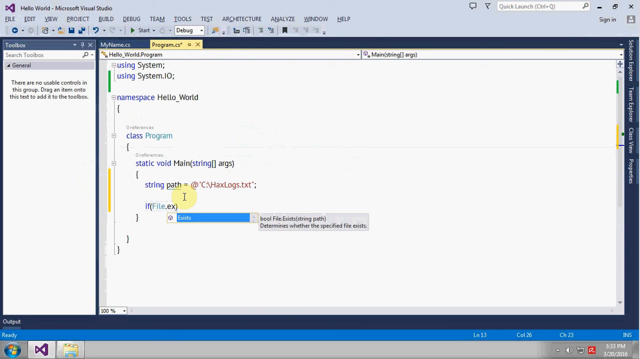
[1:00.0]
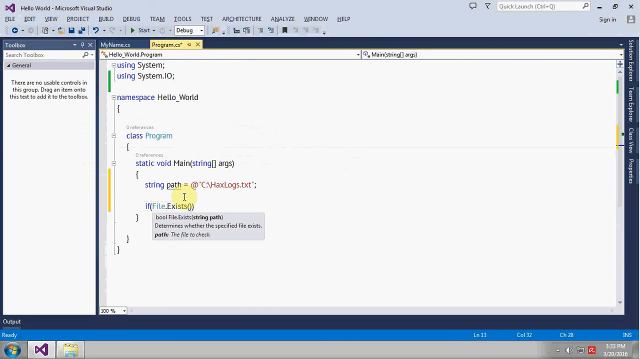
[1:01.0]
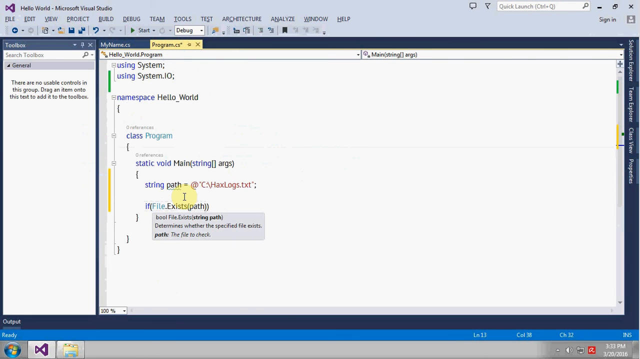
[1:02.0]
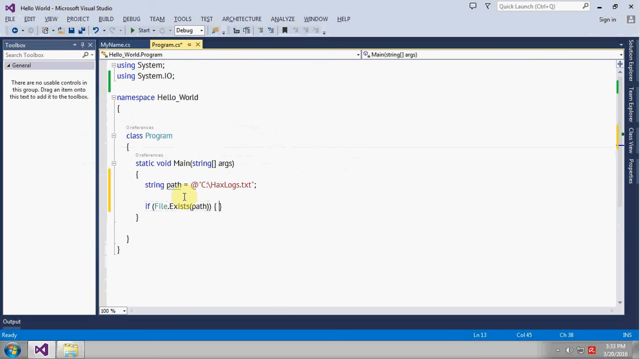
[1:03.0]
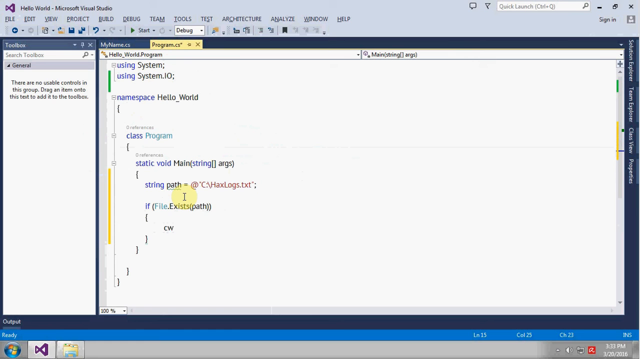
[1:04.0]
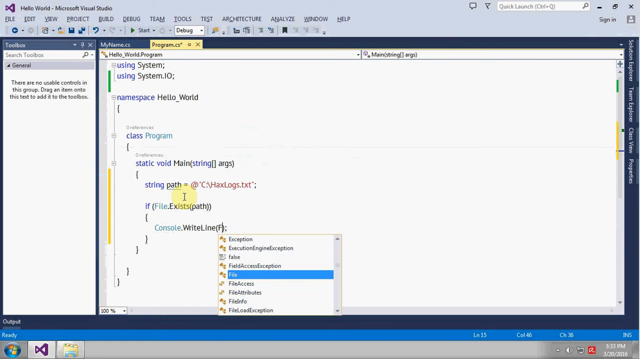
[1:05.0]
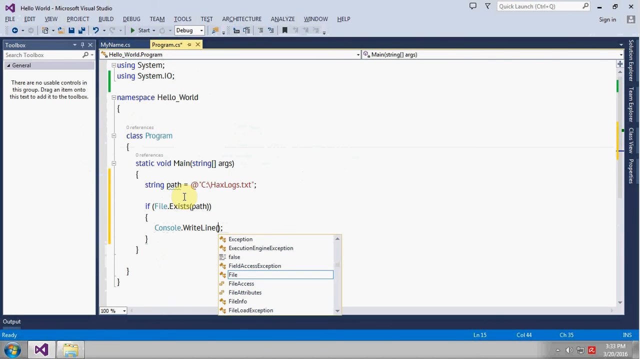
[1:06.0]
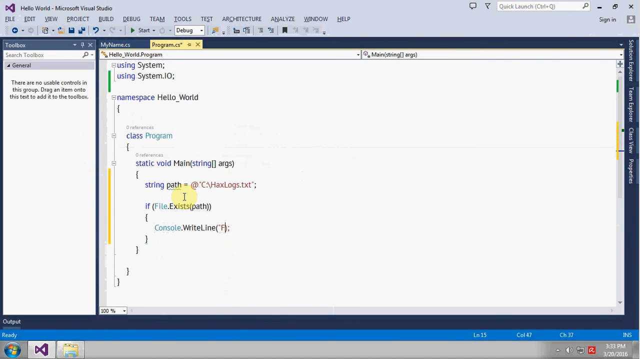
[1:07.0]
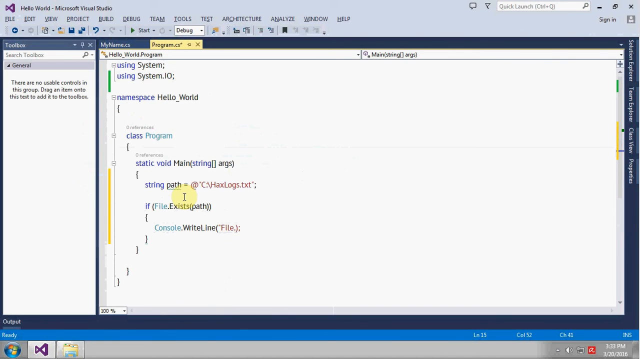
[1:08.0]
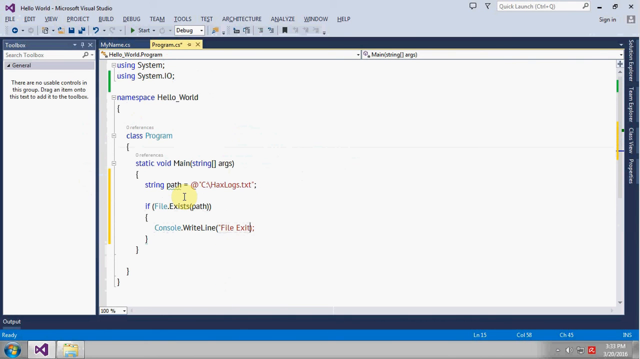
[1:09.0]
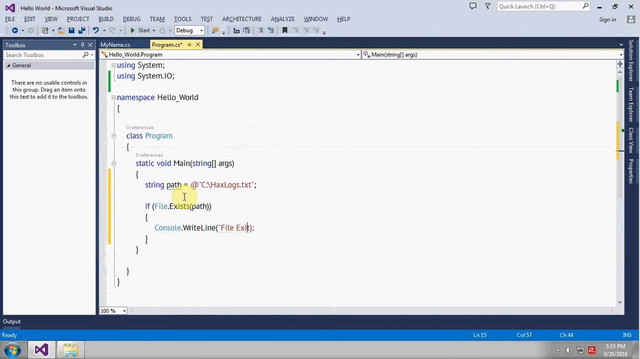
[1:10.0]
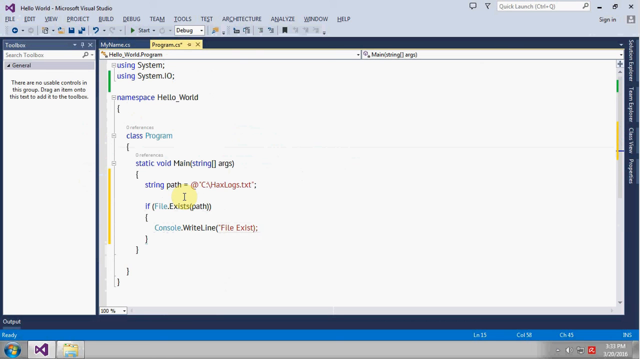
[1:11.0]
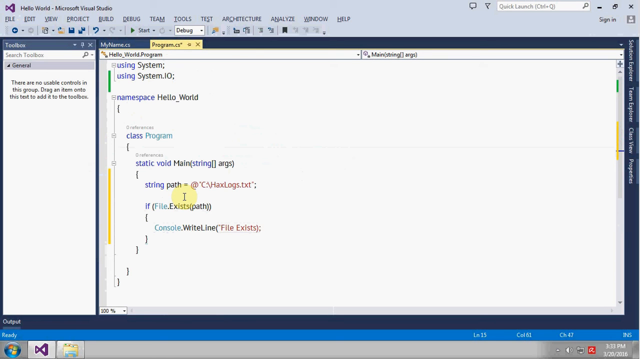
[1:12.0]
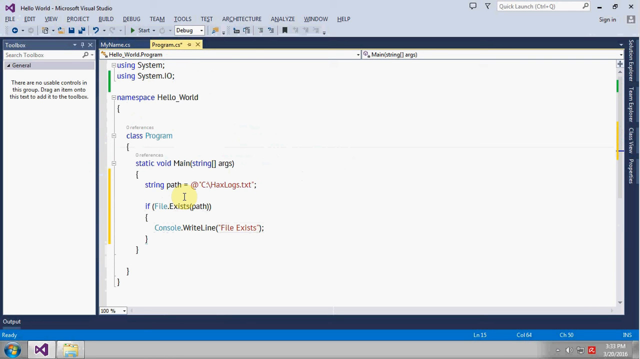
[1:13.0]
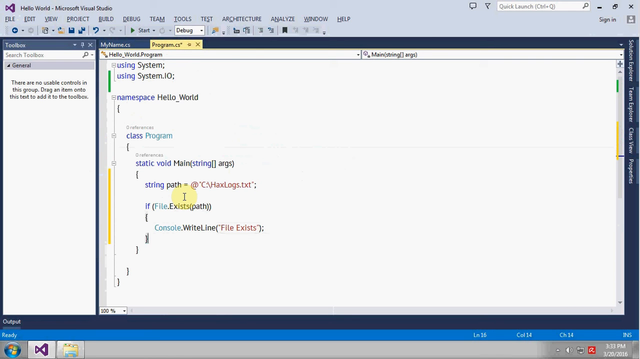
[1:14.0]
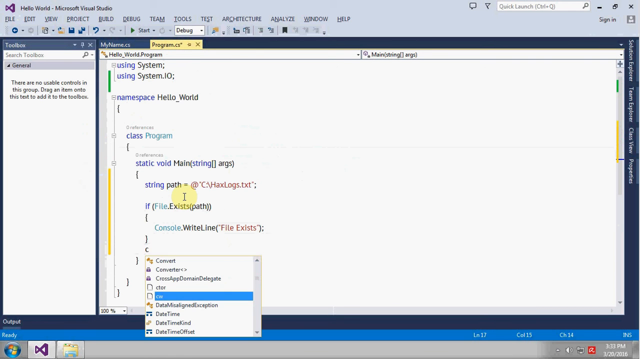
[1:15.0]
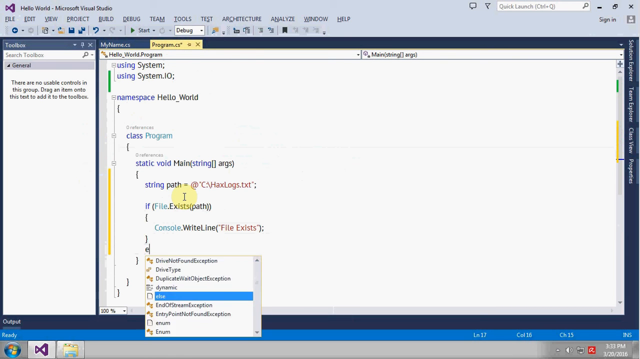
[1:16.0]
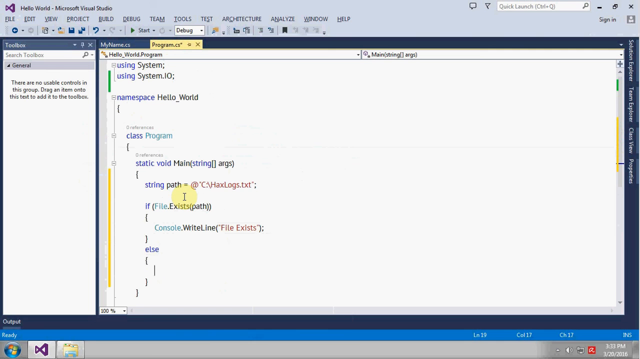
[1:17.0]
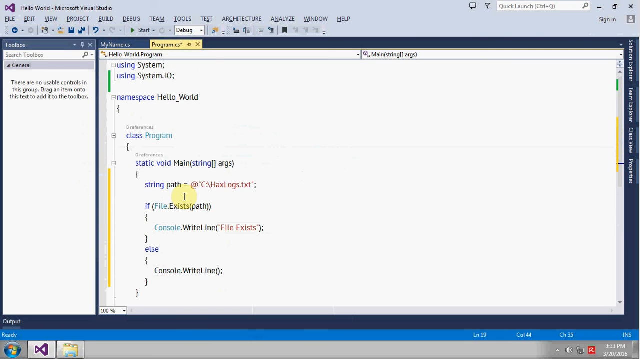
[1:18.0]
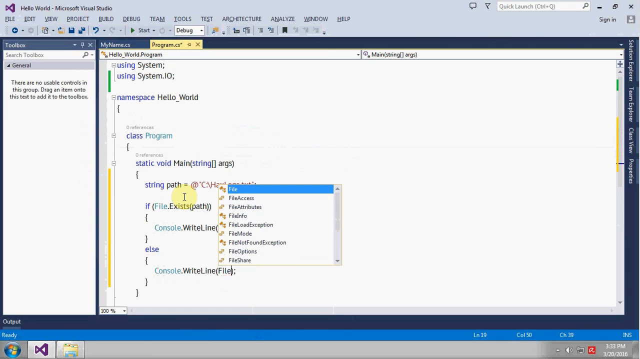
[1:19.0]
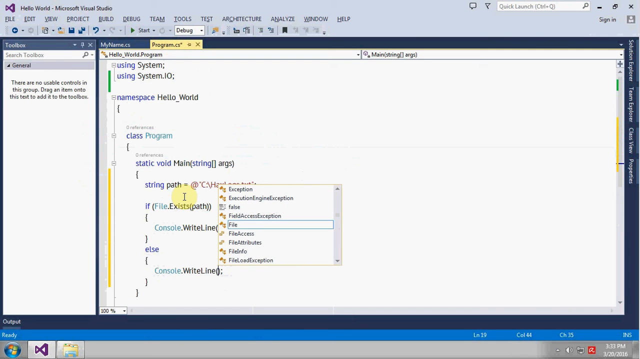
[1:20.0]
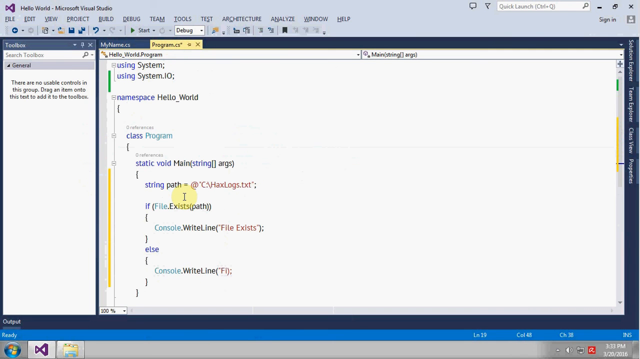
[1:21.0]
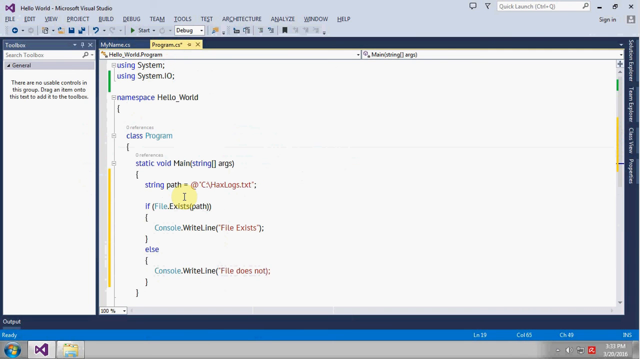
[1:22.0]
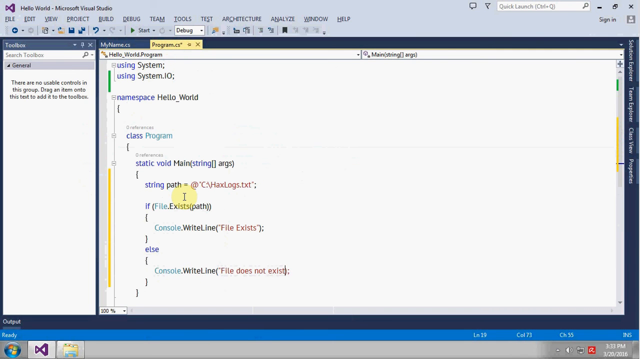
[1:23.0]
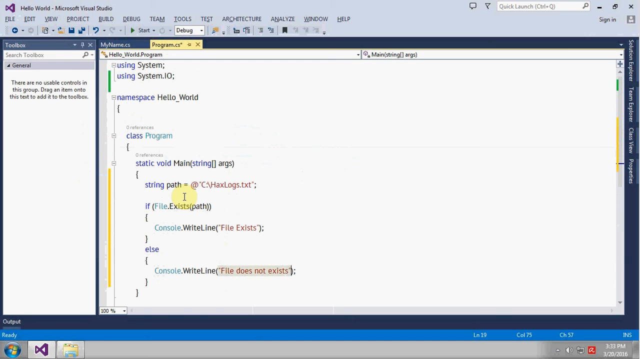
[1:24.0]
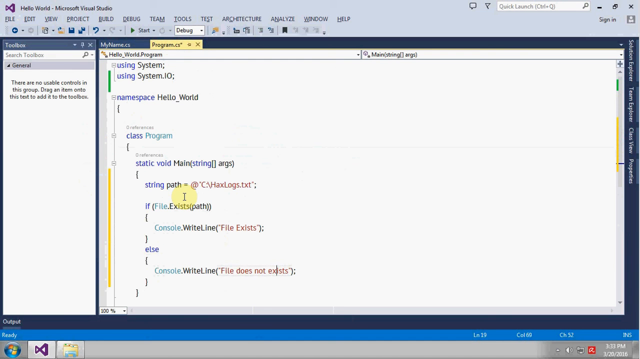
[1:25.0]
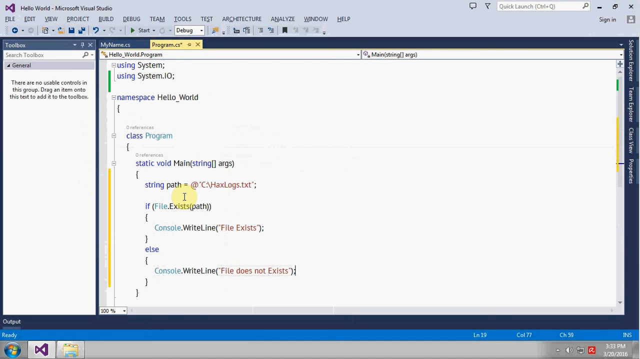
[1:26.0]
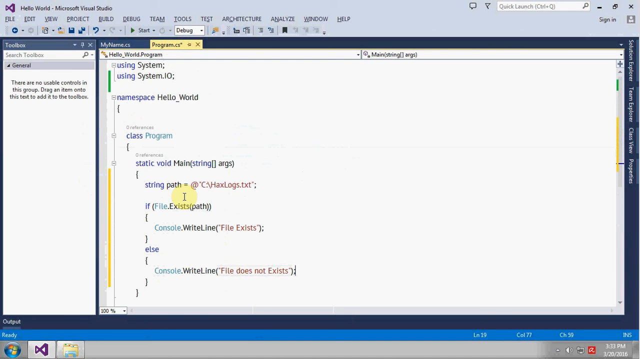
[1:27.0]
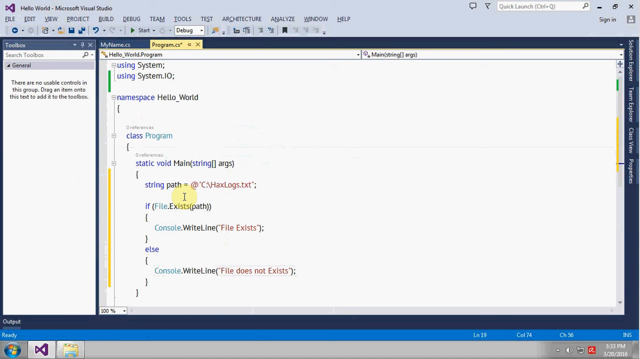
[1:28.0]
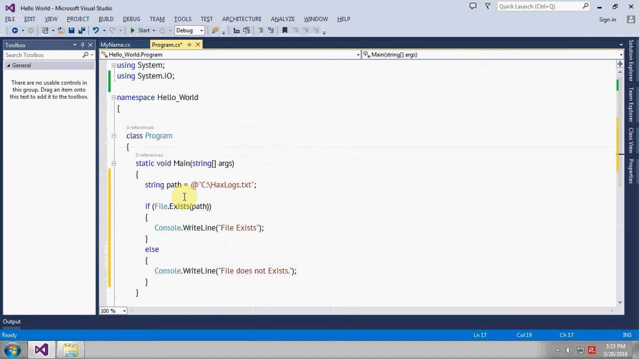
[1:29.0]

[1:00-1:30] Microsoft Visual Studio is open on Windows 7 with the Hello World program. The code shows "using System", "using System.IO", "namespace hello_world", "class program", "static void main string args", a string path set to the C has logs.txt file, and an if statement checking whether the file exists at that path, followed by a console white line that says "file exists". This is followed by another condition: if the file does not exist, a white line says "file does not exist". The script is apparently using the system to confirm whether the logs are there.